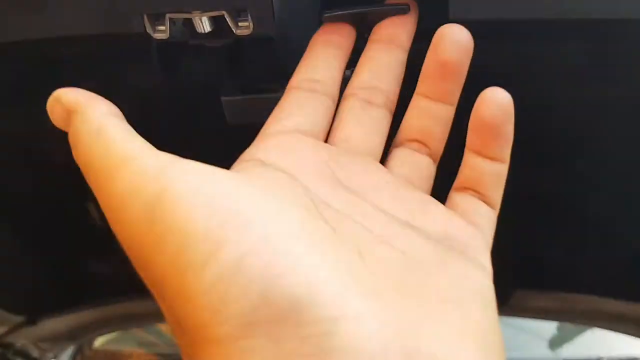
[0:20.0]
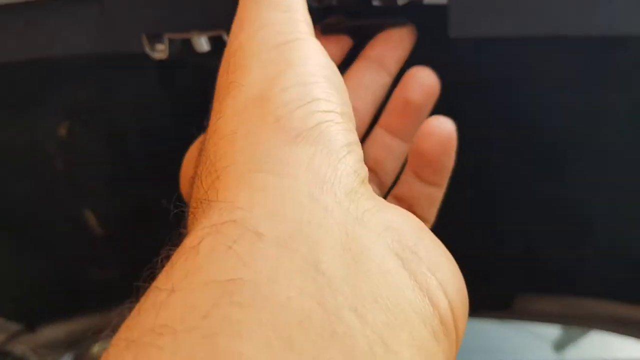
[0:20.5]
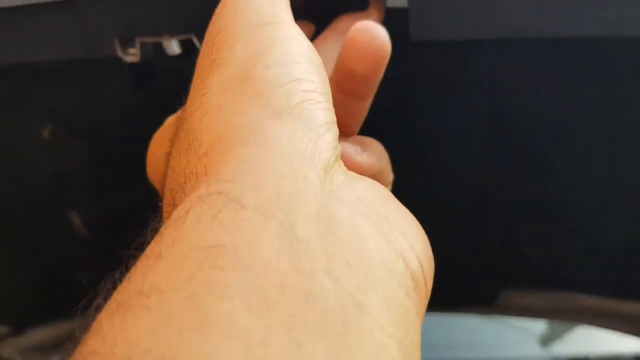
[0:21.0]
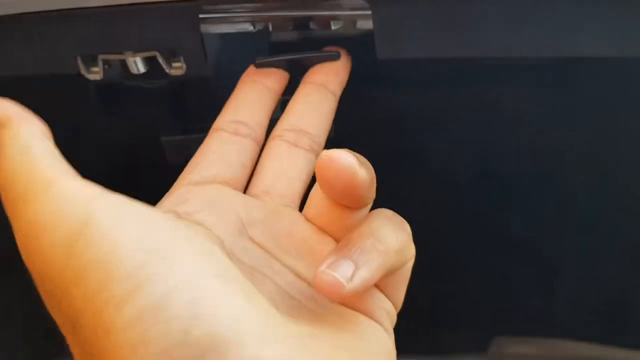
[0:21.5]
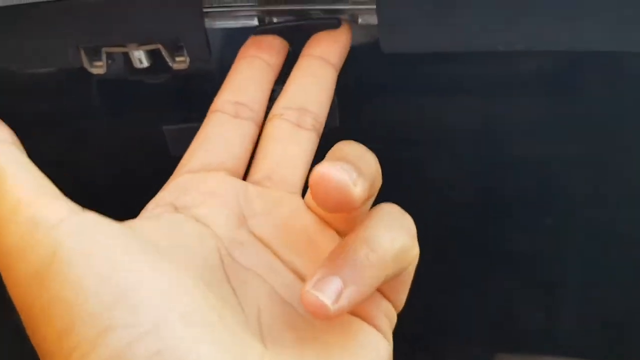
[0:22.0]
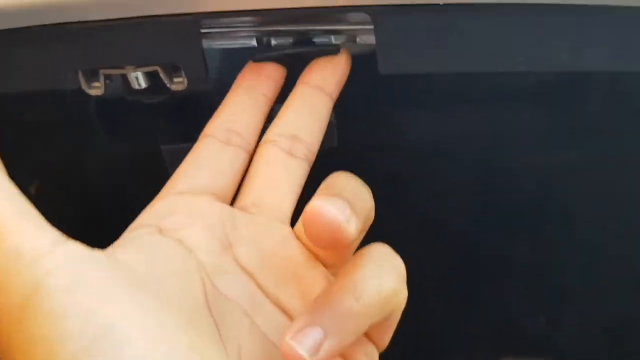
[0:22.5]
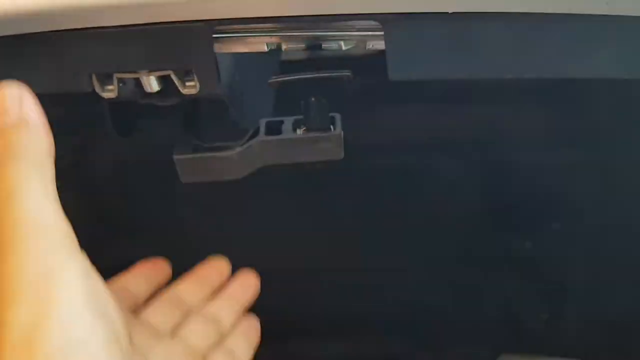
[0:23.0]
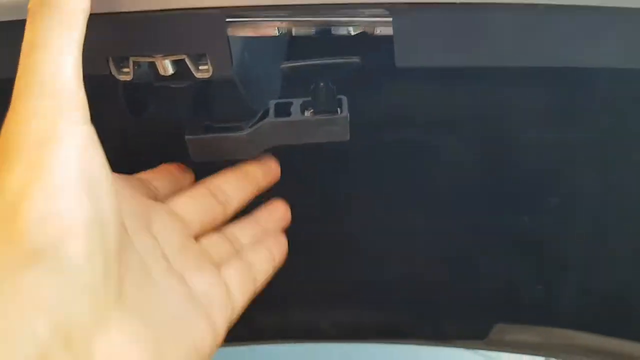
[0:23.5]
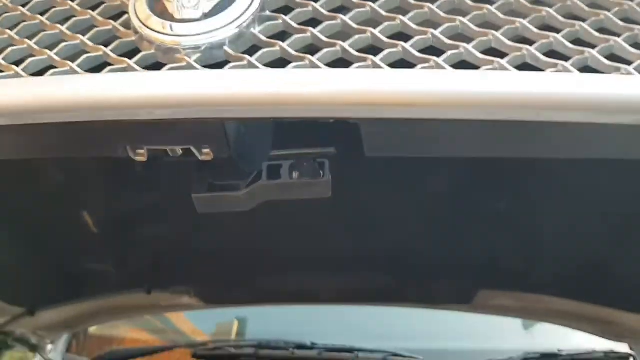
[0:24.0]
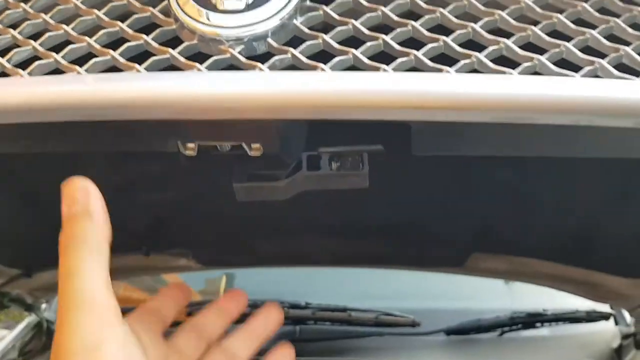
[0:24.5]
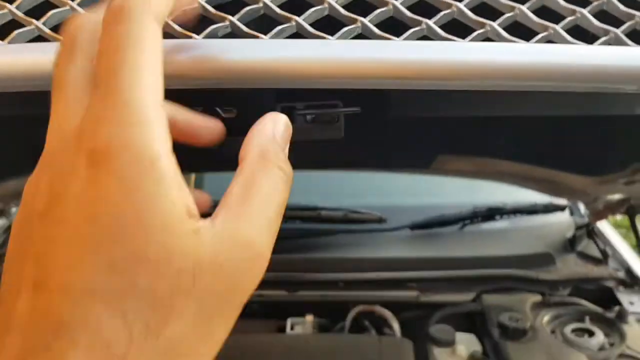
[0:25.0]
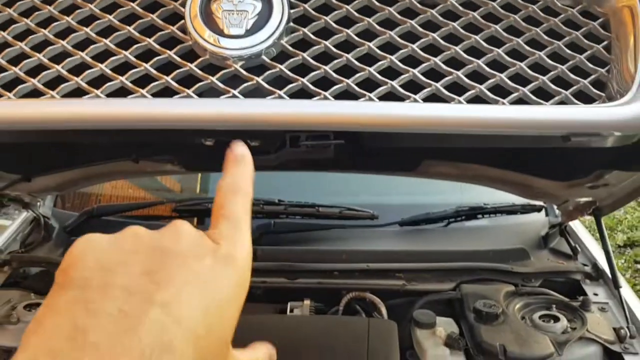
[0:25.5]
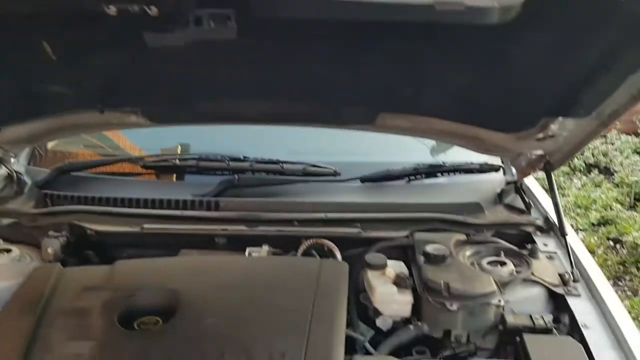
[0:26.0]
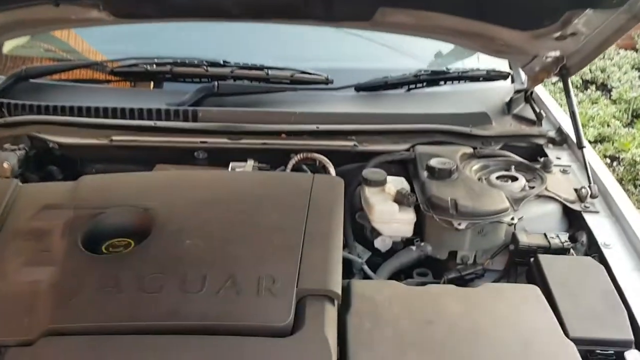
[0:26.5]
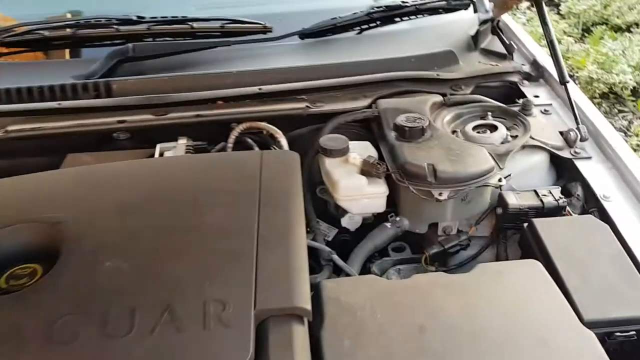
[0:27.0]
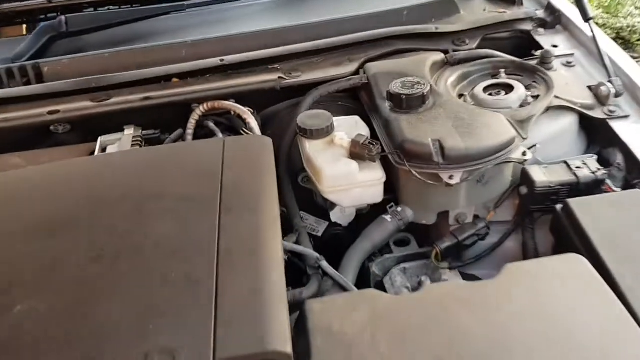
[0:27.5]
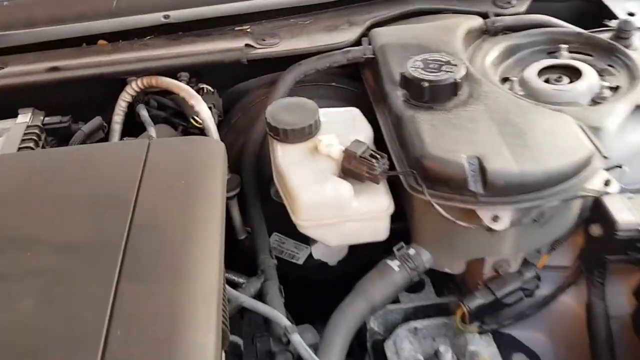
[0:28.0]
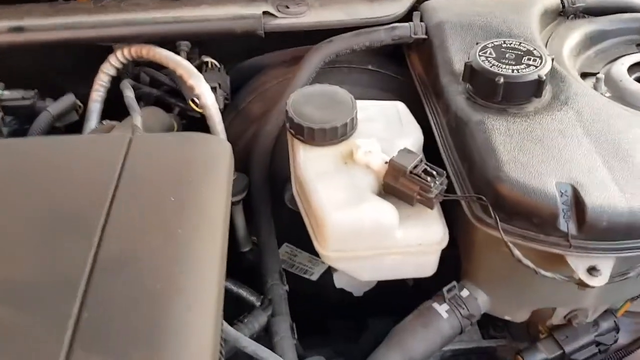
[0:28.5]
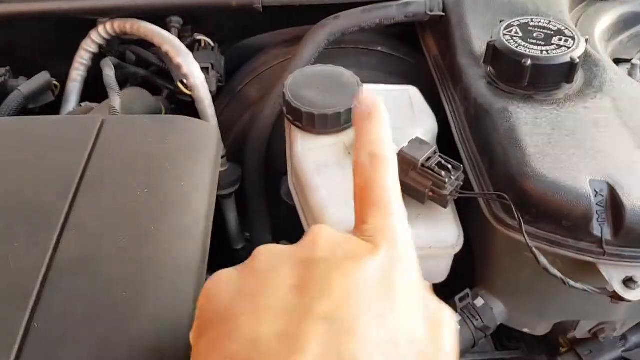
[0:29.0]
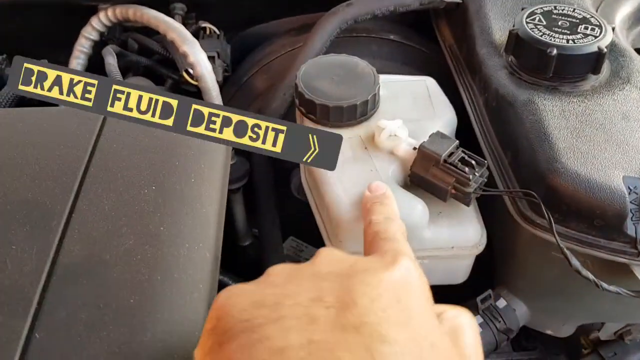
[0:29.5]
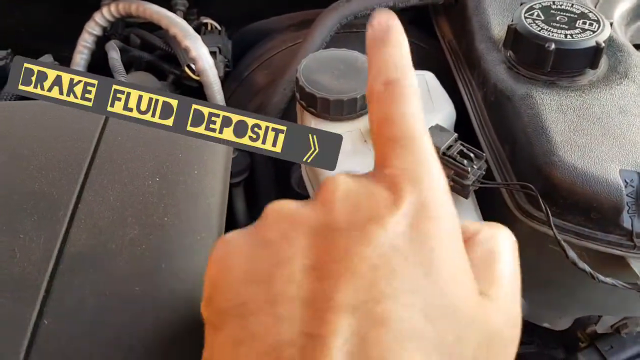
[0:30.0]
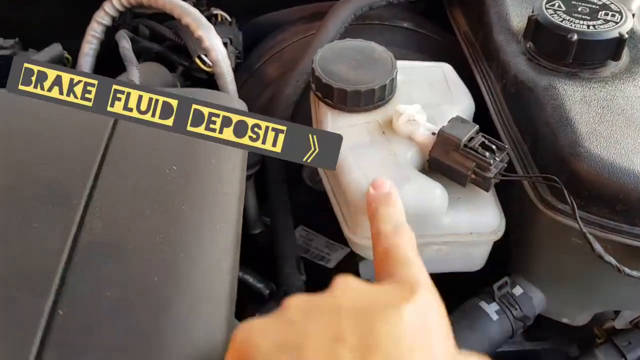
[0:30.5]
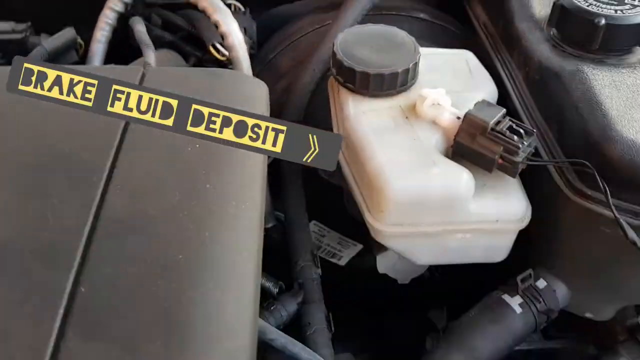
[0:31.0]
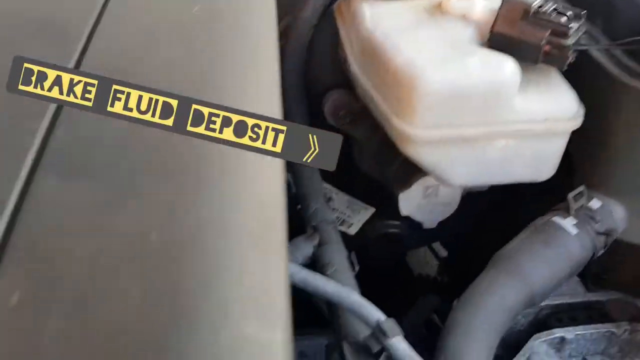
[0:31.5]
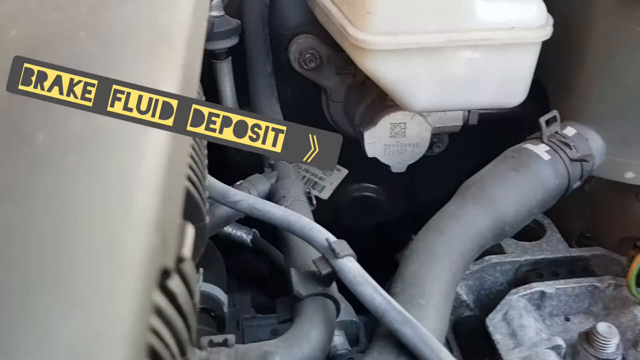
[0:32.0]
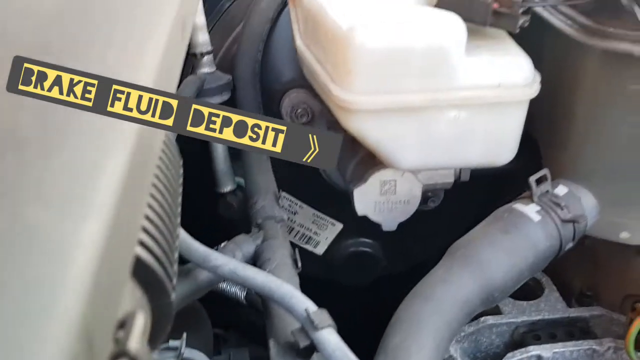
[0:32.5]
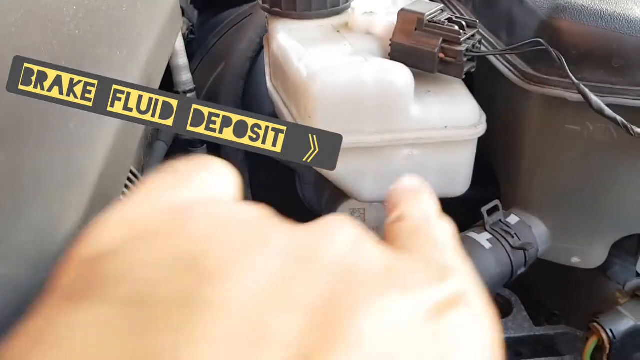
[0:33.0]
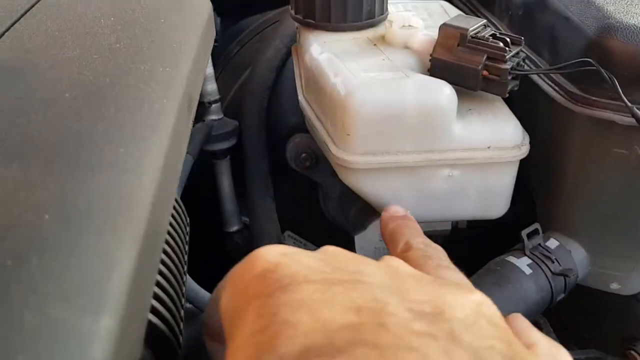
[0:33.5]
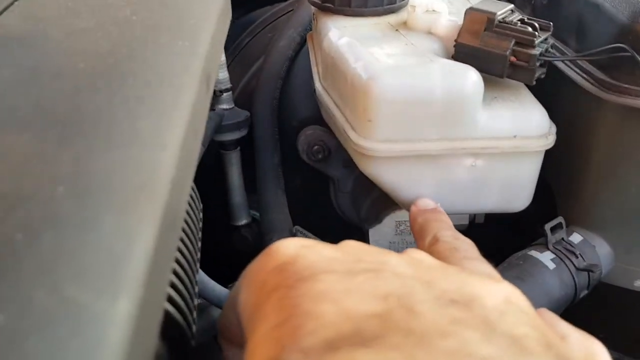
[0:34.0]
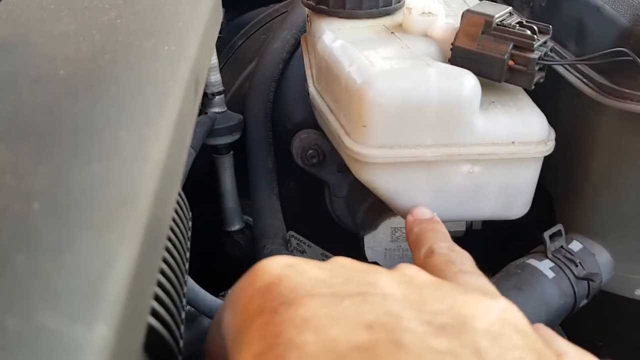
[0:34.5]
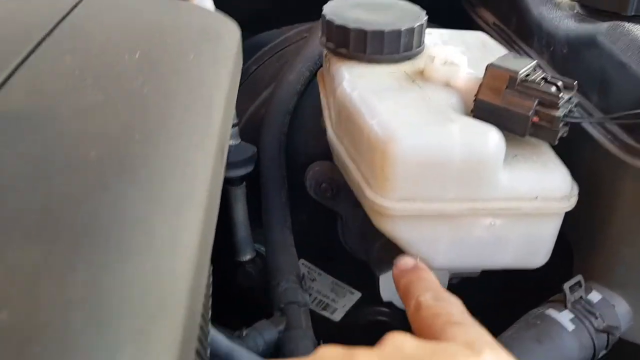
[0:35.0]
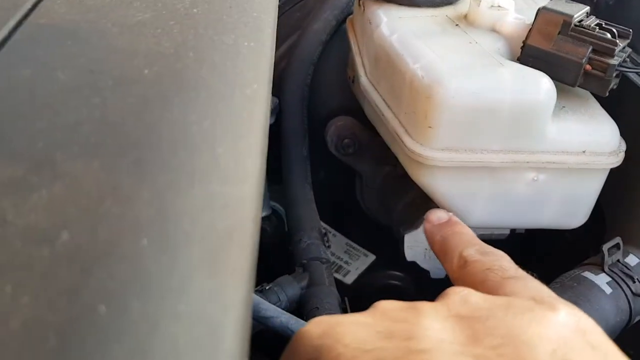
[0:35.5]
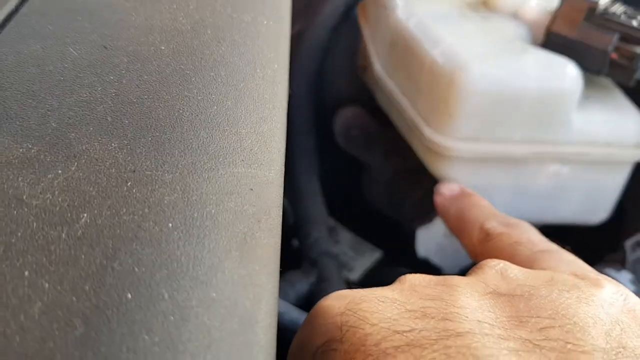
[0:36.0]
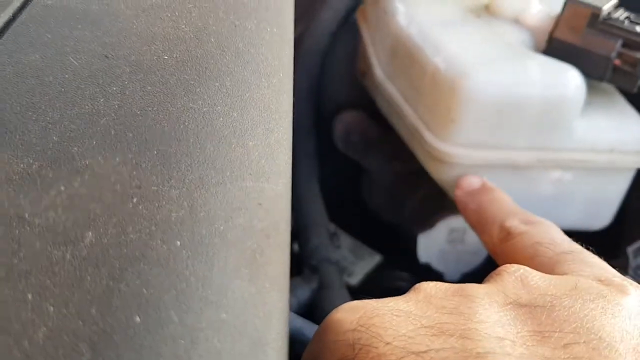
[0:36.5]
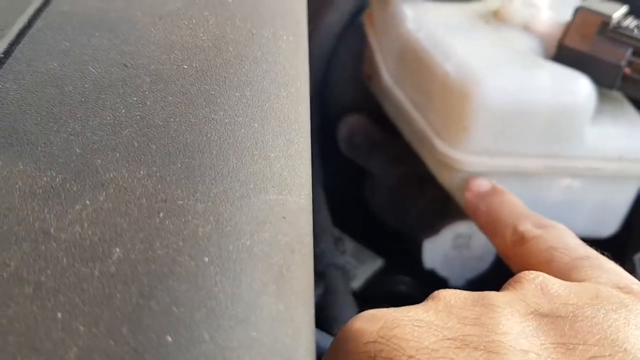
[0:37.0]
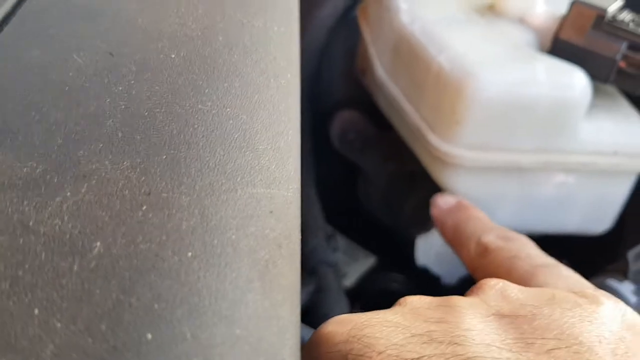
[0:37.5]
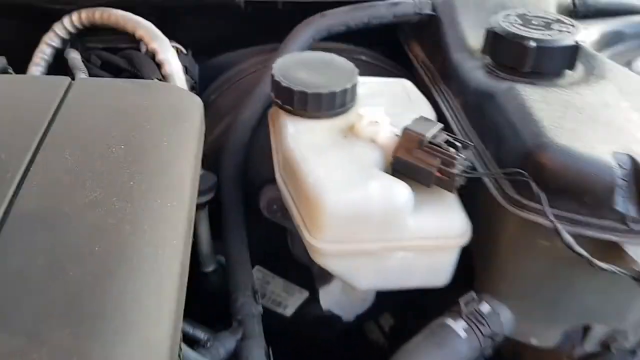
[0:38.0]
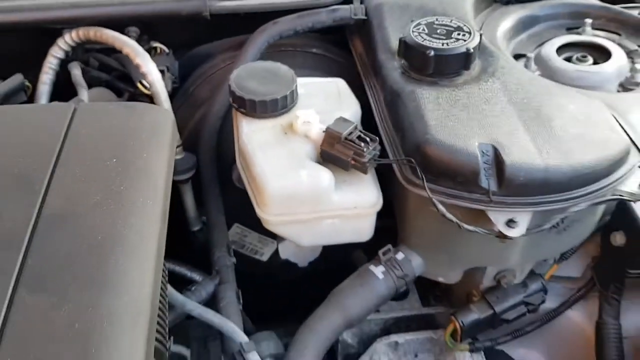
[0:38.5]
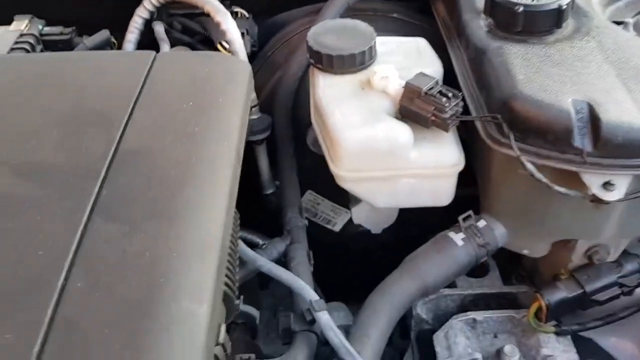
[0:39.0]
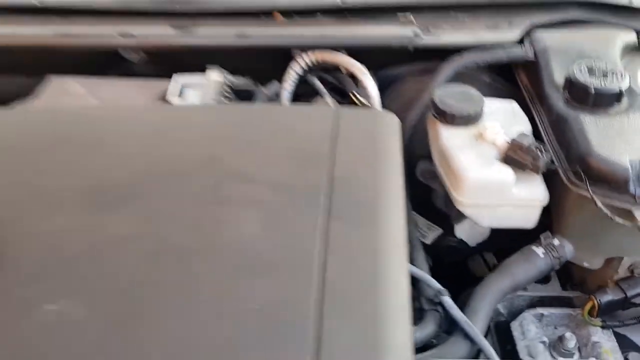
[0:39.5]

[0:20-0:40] The cameraman's left hand, palm pointing upward, reaches up and touches a switch in the vehicle, making it go up and down, then presses a gray plastic switch right behind it. The camera zooms out to show the grill and the Jaguar logo on the hood. The hood is open, and the camera zooms in under it, showing all the components, with text reading "brake fluid deposit". On the left side is a white fluid container with a black lid, and the cameraman points at it a few times while the camera shakes around a bit. He brings his left hand over again and points at the area around where the container is sitting. The image seems to freeze there for a few seconds, and then the camera zooms out.